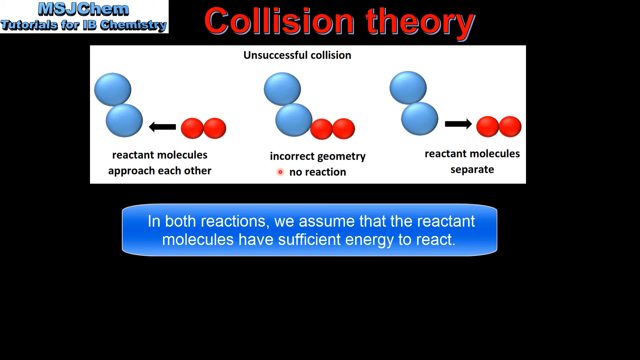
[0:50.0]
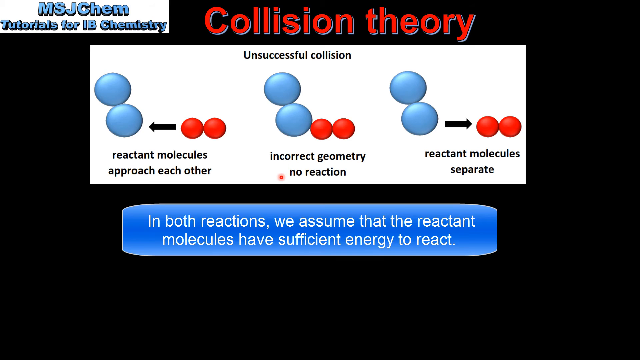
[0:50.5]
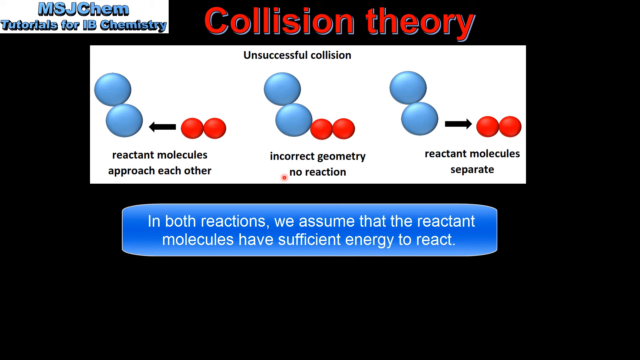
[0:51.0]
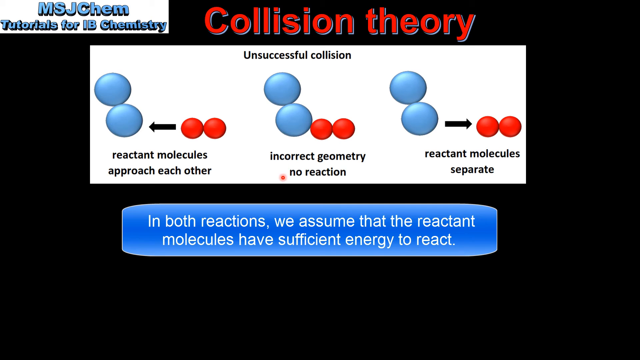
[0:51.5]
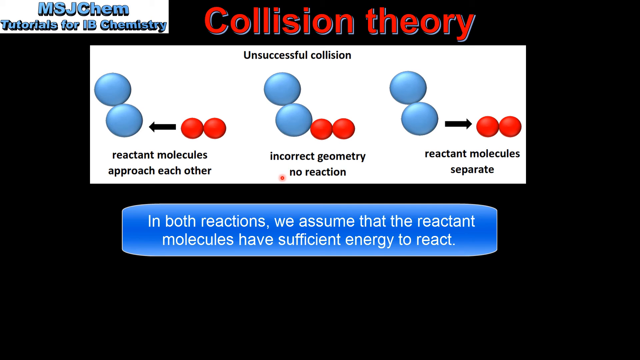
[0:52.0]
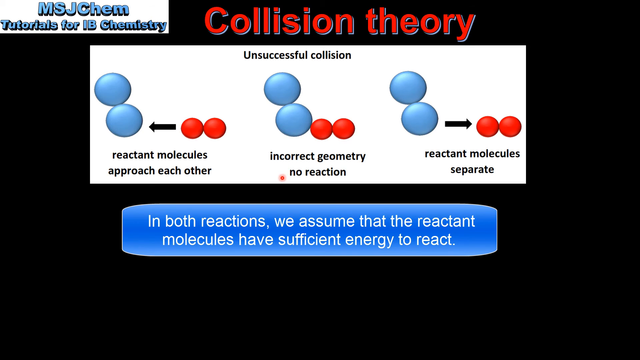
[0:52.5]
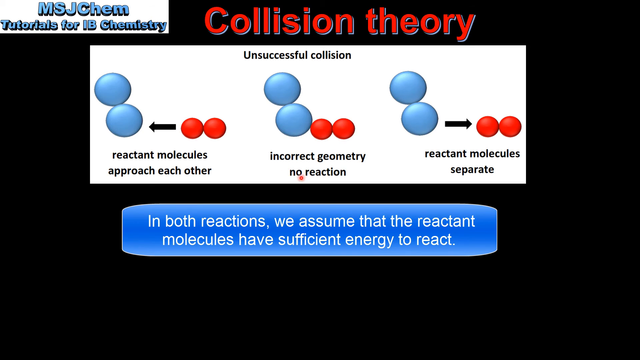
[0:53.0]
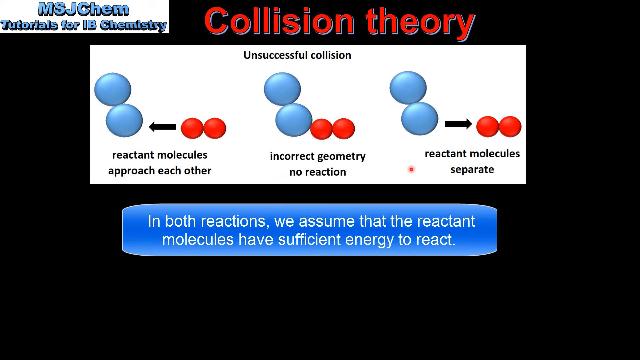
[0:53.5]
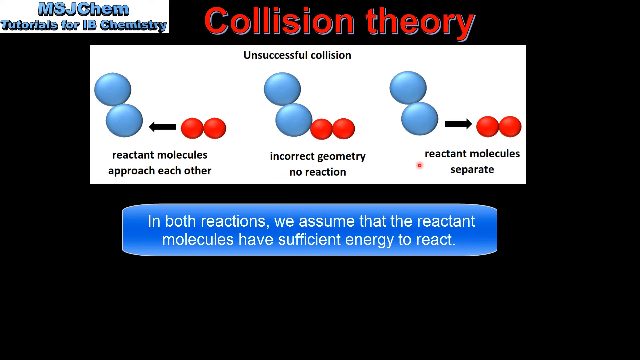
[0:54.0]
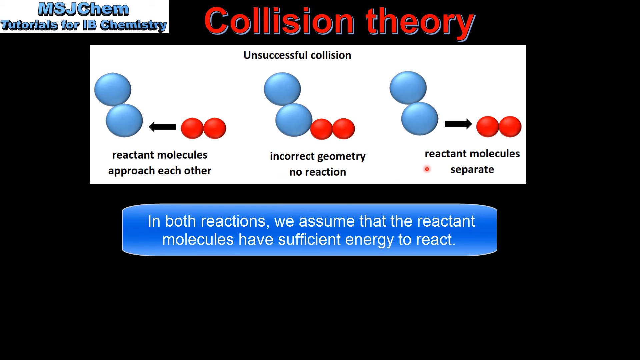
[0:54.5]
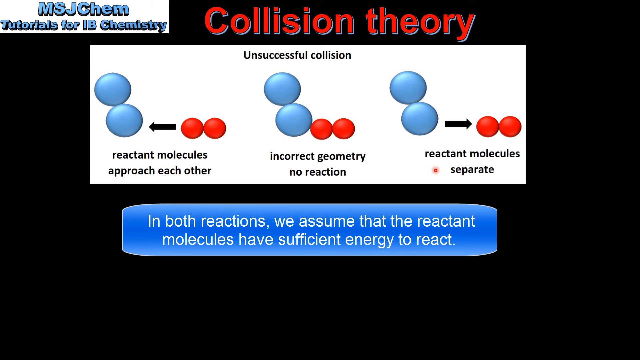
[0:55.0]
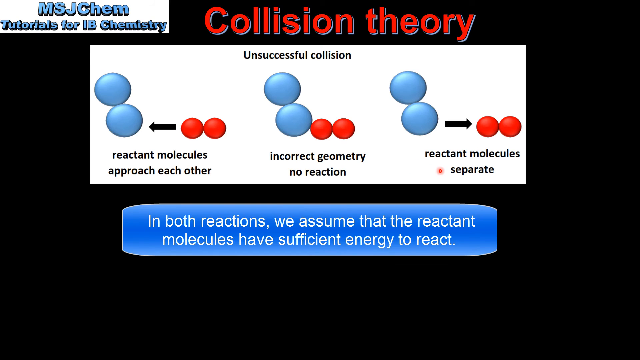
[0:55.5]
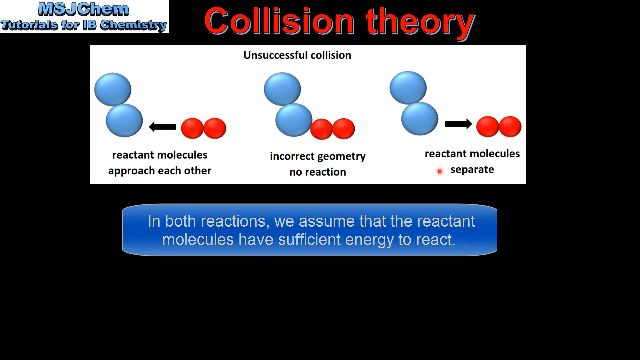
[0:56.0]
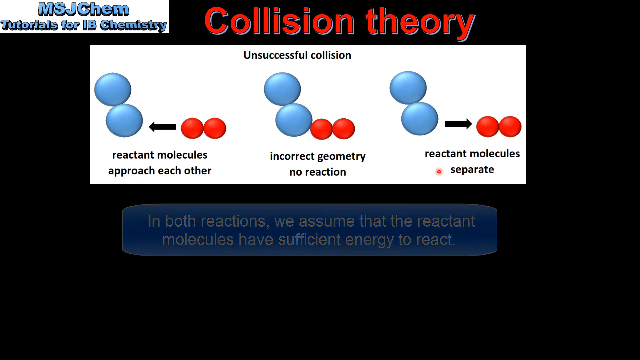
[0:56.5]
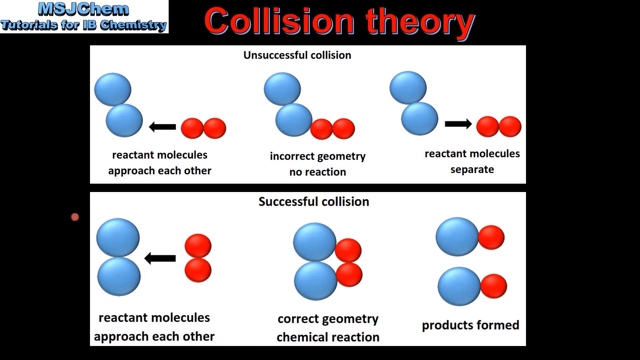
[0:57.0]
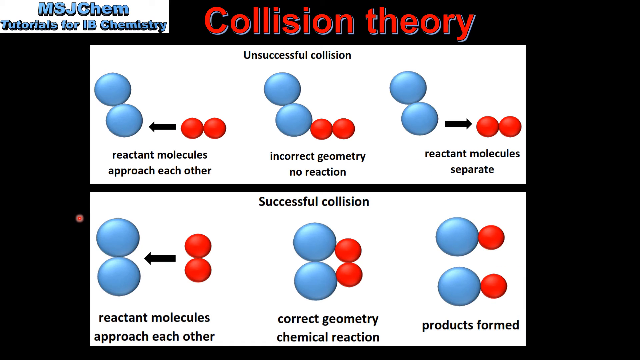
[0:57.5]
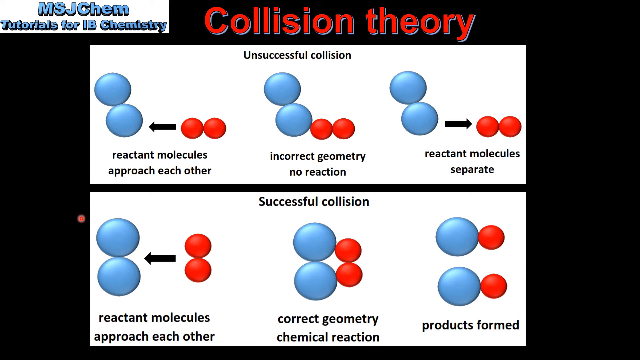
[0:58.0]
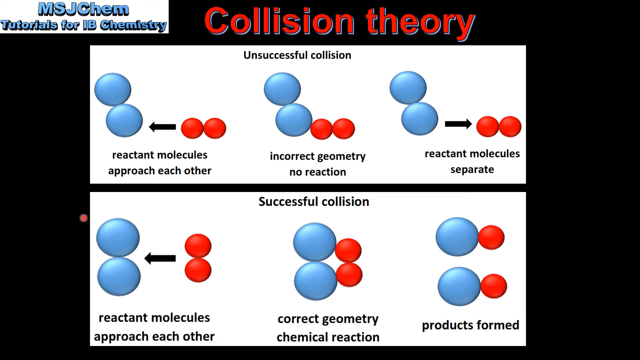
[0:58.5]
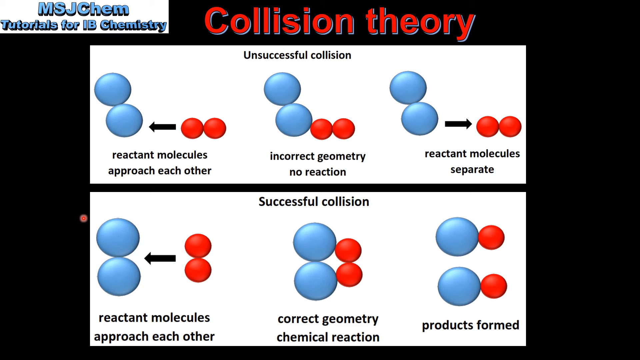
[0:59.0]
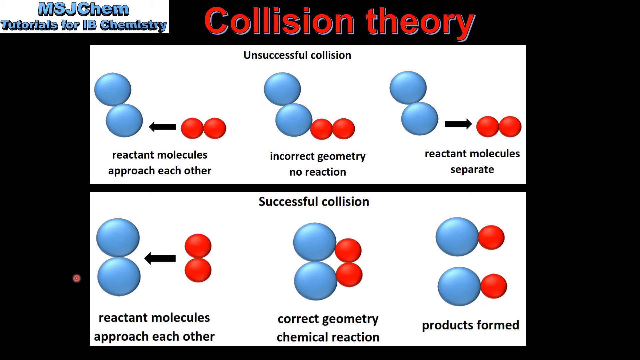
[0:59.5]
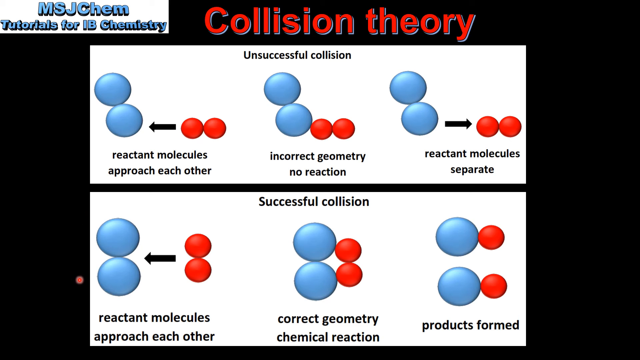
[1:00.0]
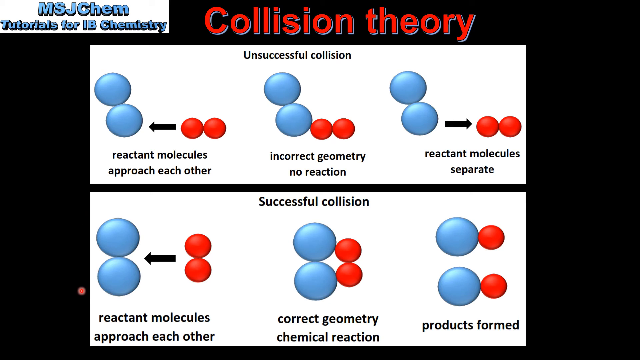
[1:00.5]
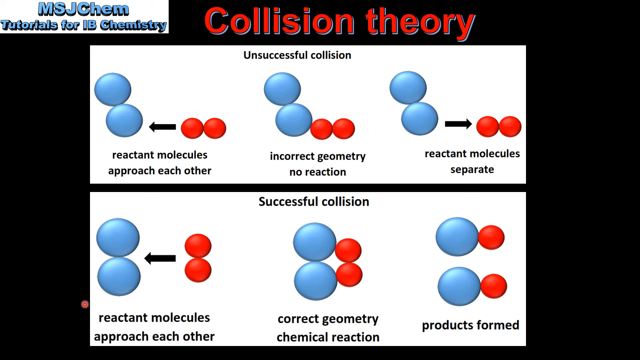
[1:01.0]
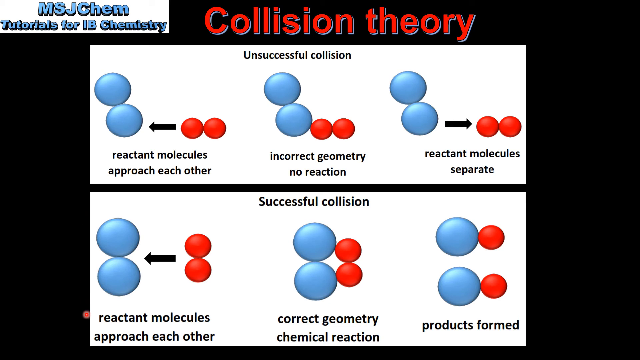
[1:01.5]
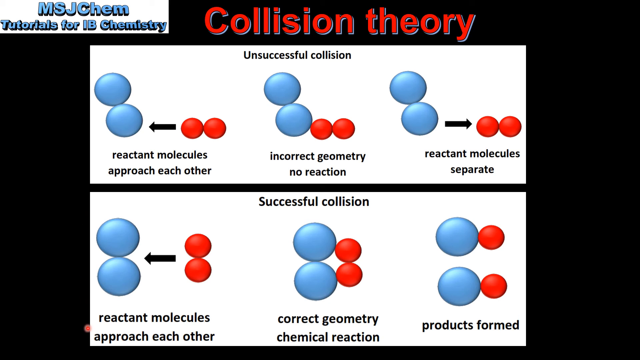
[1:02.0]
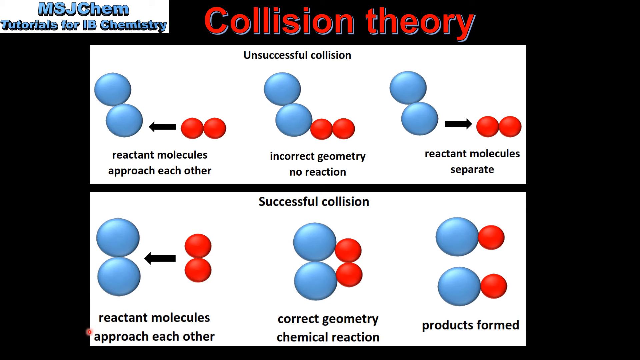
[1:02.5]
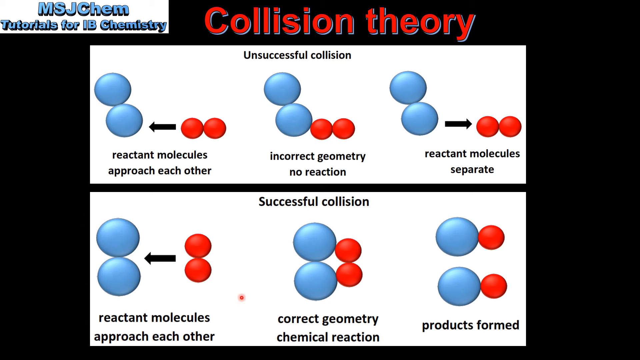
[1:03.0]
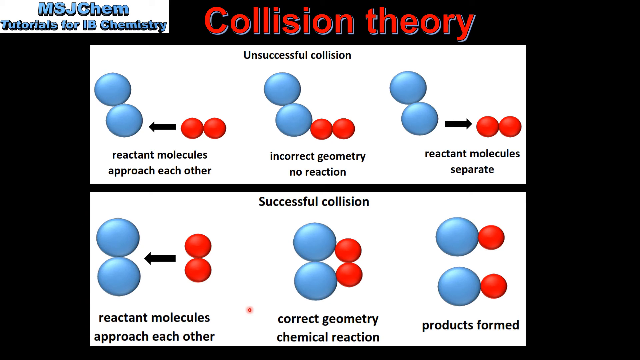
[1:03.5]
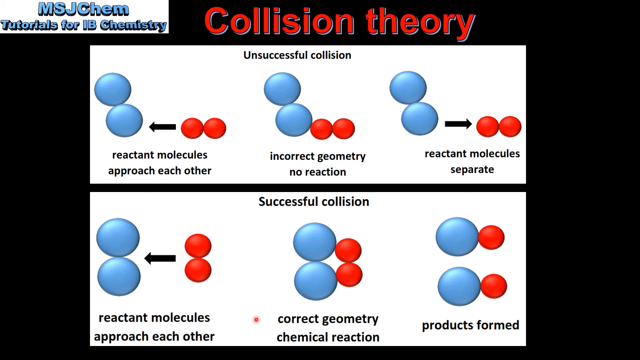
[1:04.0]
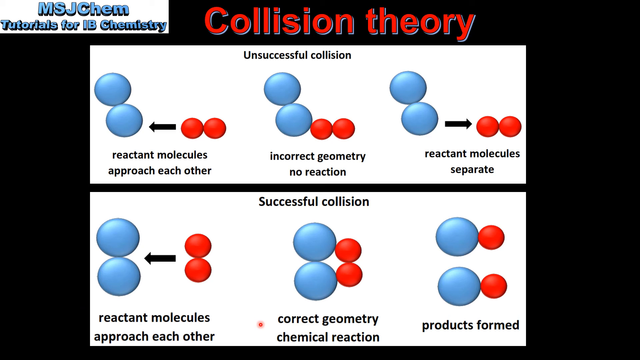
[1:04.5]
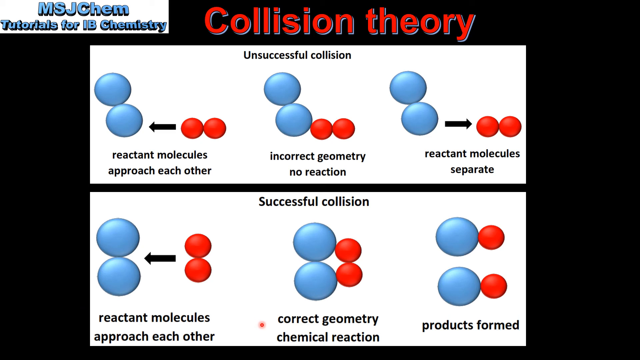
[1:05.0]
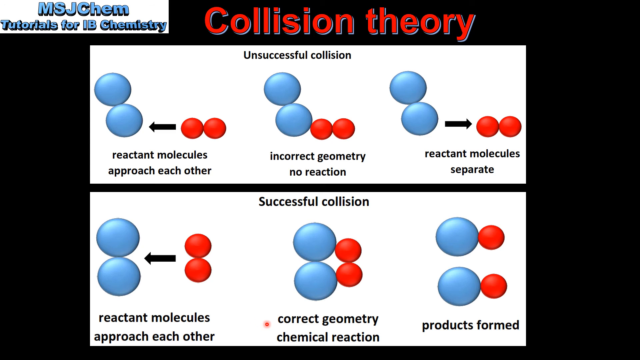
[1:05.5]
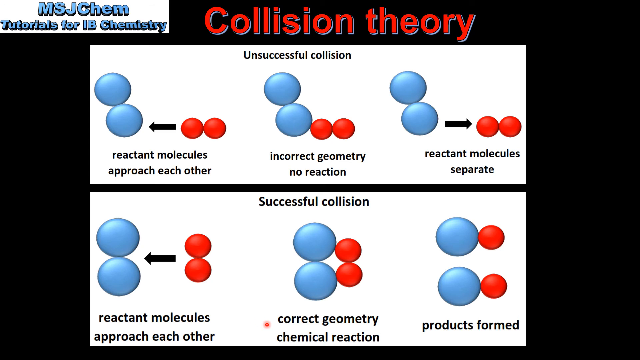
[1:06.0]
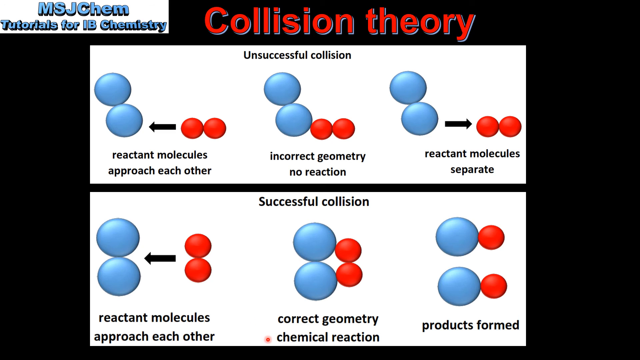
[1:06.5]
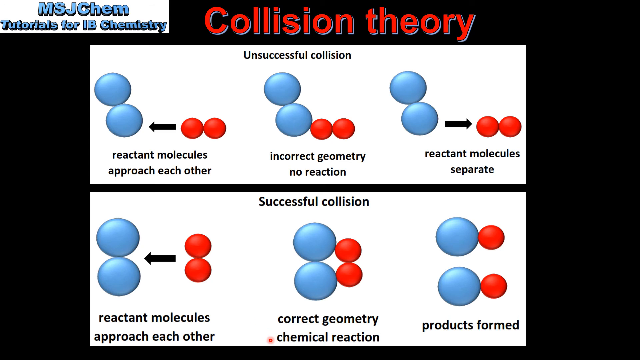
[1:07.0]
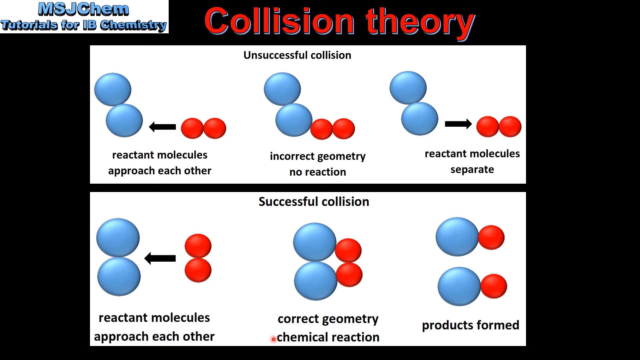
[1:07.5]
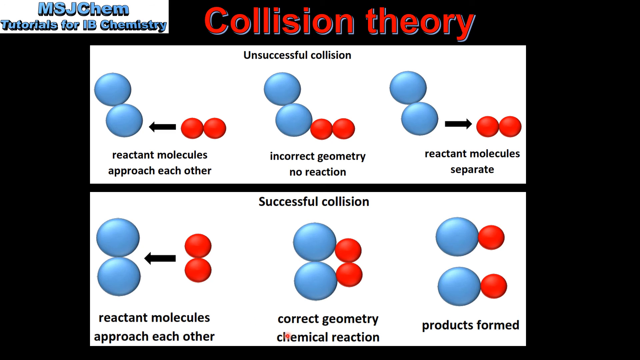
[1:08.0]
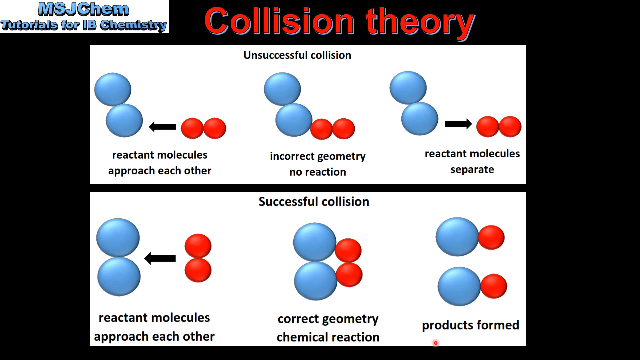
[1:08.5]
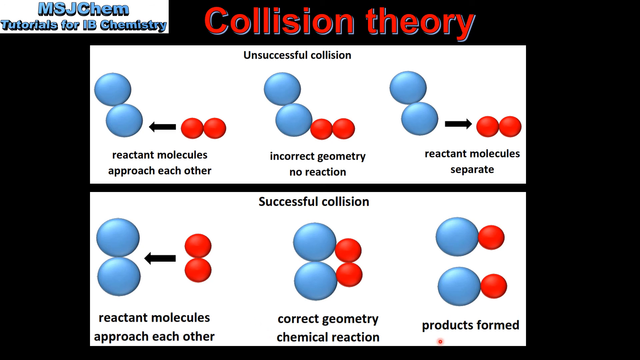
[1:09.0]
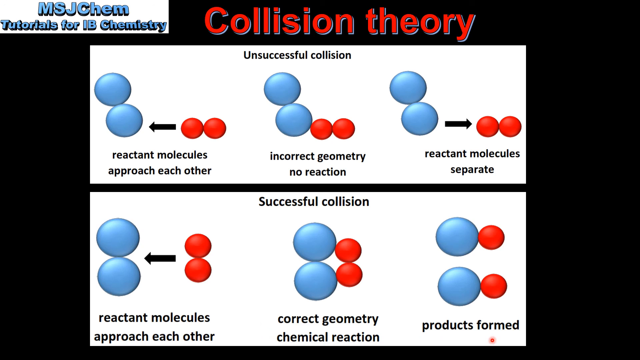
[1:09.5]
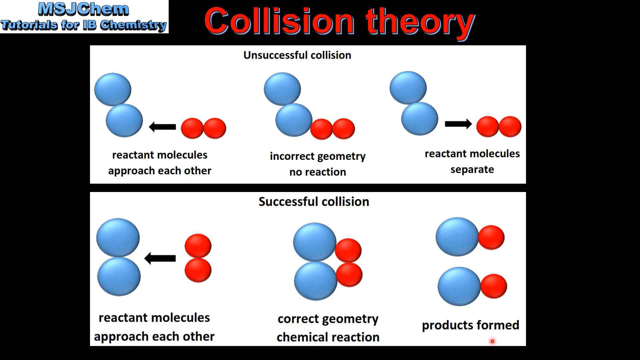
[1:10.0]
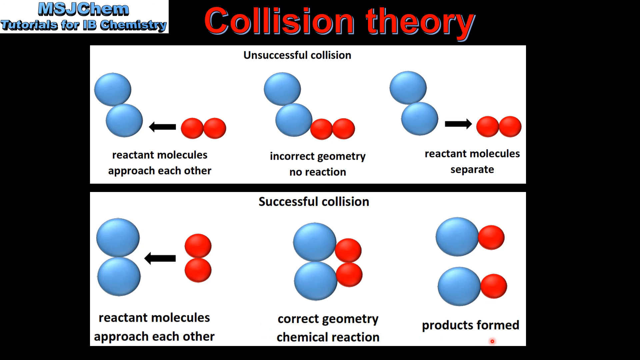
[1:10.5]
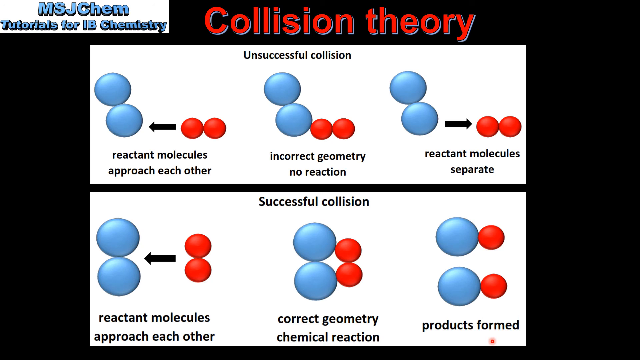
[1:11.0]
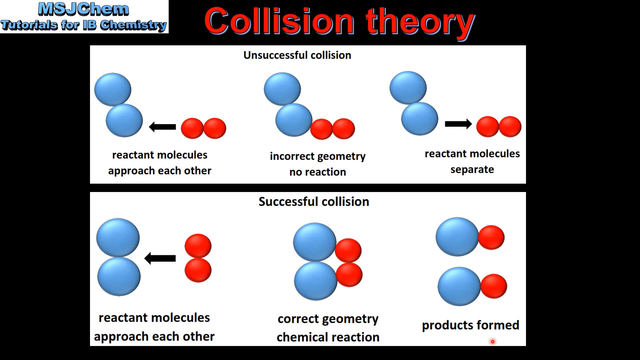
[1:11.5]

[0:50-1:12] Text is on display, and a screen shows small red dots pointing at the graph, possibly guided by someone talking. Two graphics of collisions then appear: the first shows an unsuccessful collision and the second a successful collision.